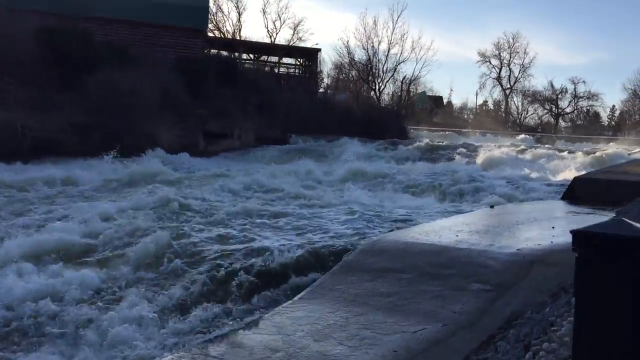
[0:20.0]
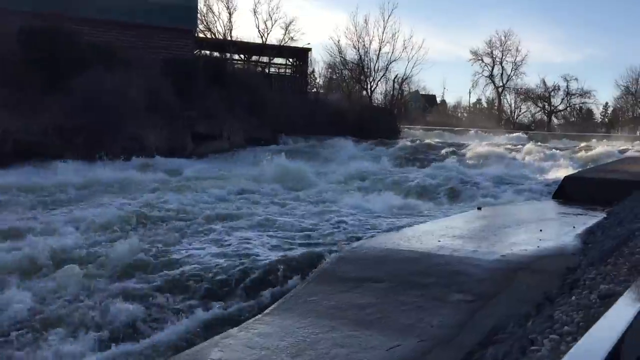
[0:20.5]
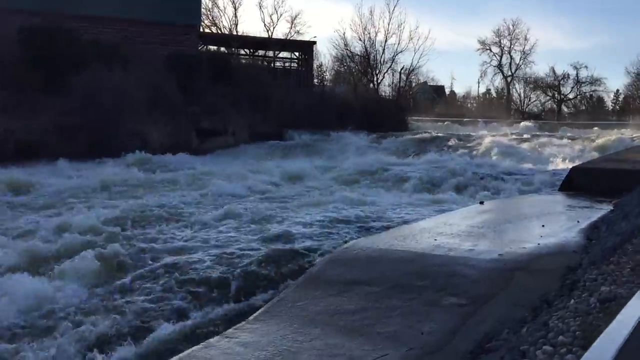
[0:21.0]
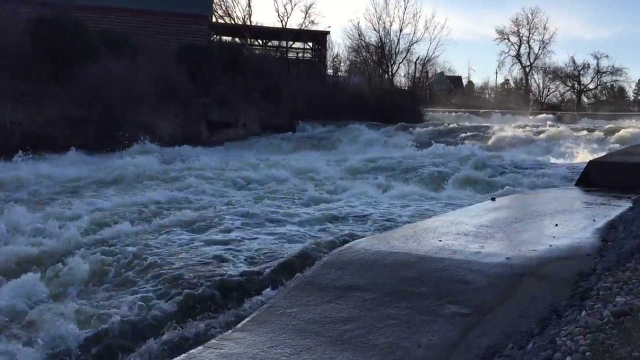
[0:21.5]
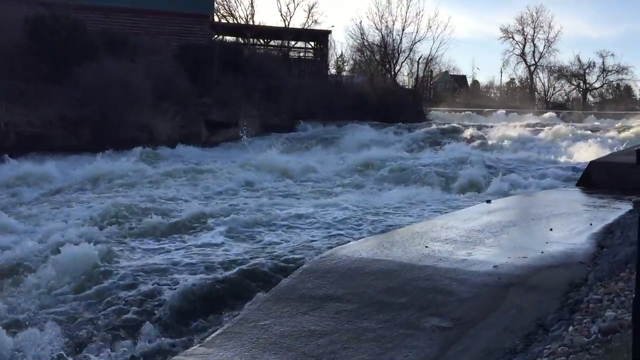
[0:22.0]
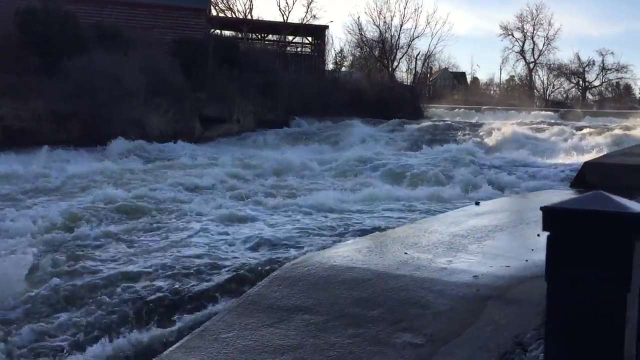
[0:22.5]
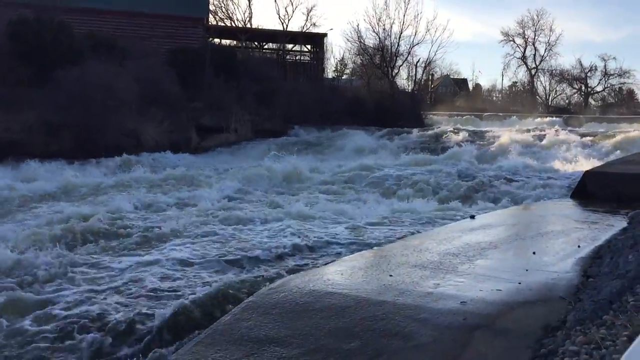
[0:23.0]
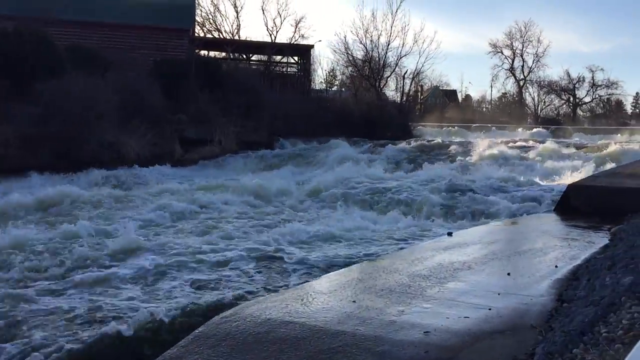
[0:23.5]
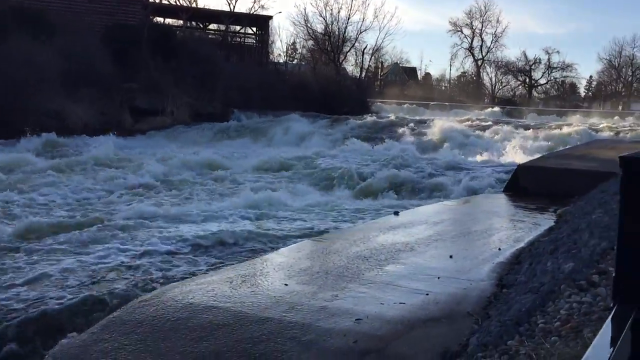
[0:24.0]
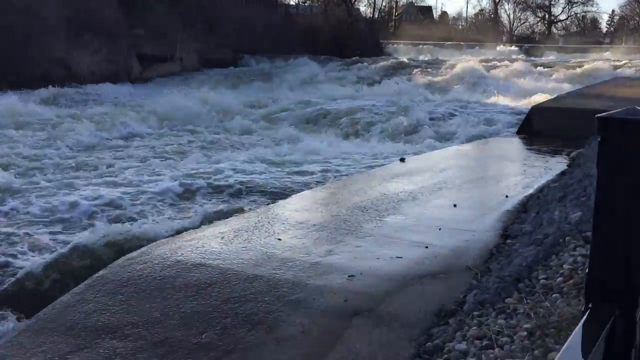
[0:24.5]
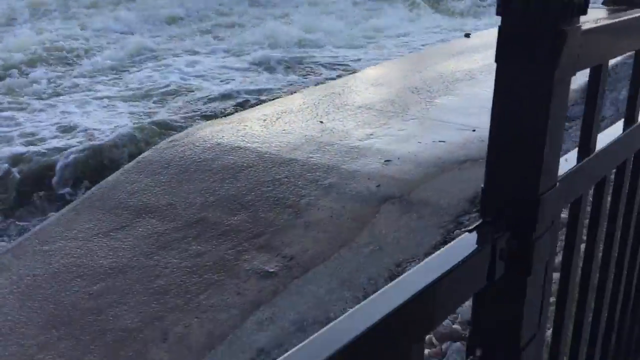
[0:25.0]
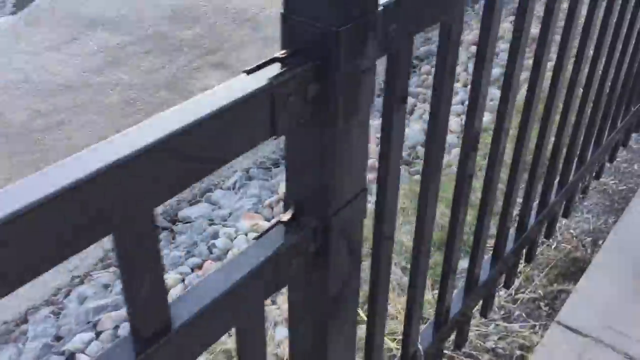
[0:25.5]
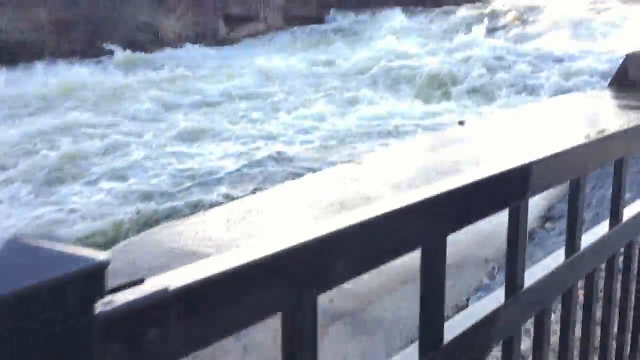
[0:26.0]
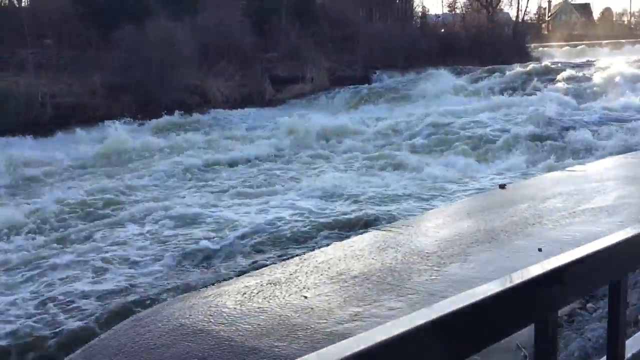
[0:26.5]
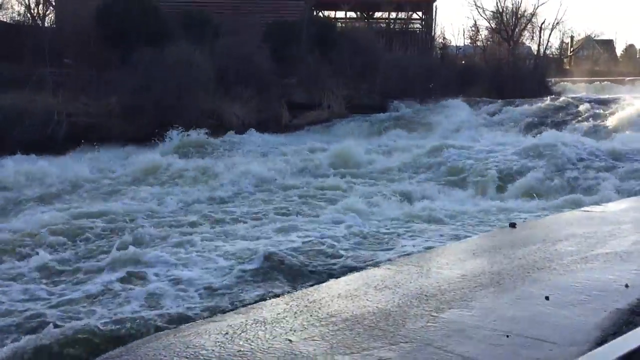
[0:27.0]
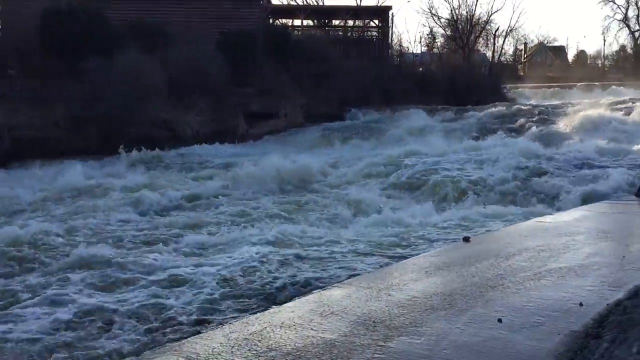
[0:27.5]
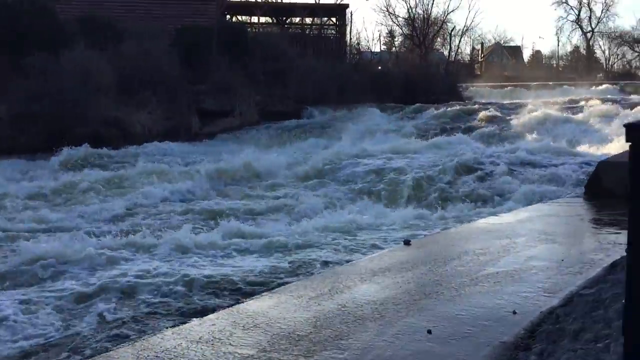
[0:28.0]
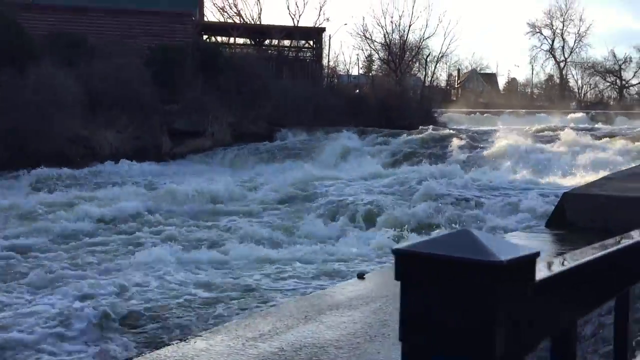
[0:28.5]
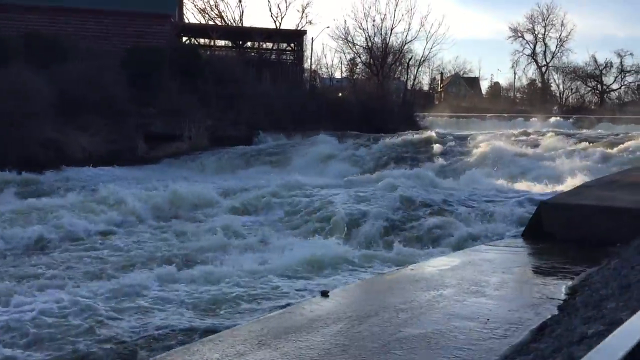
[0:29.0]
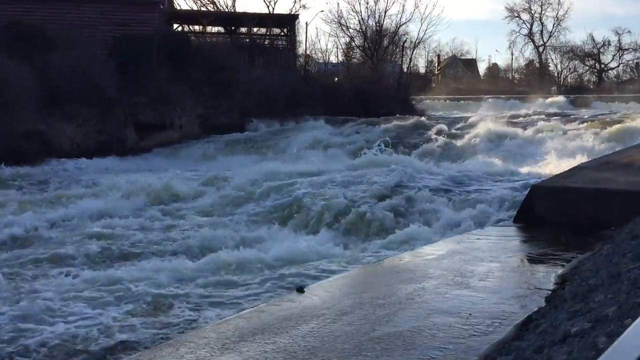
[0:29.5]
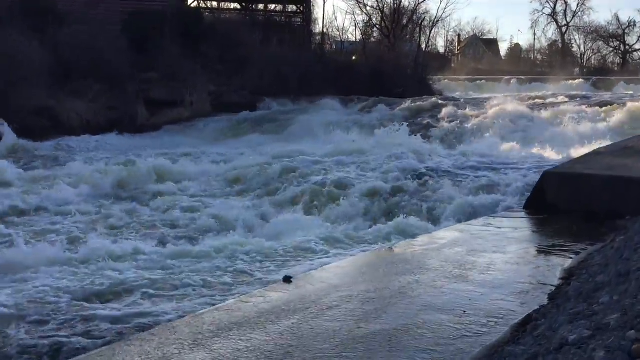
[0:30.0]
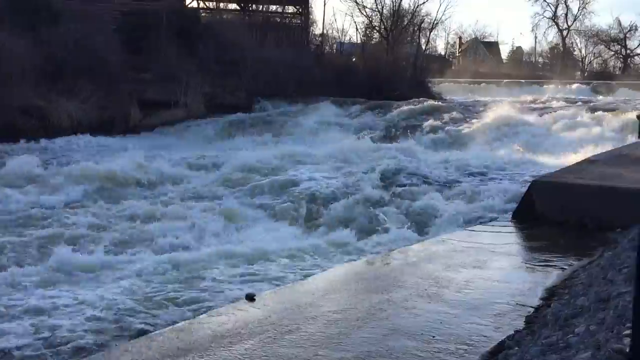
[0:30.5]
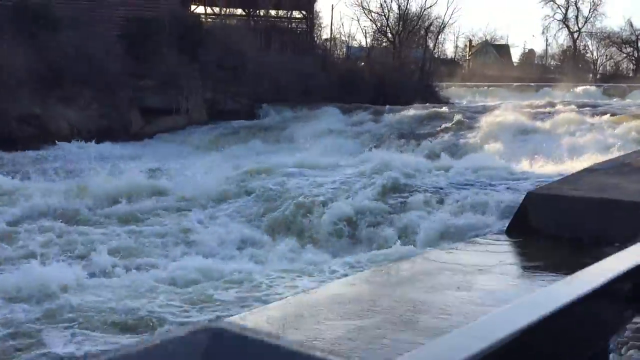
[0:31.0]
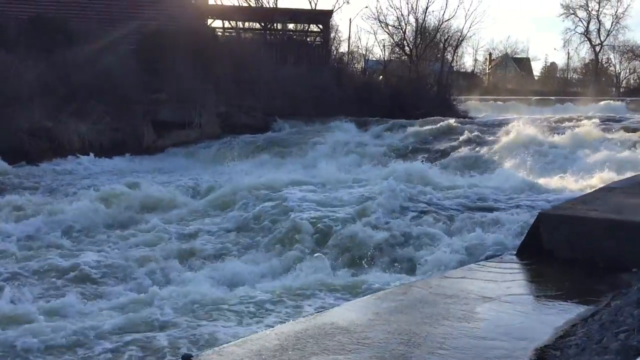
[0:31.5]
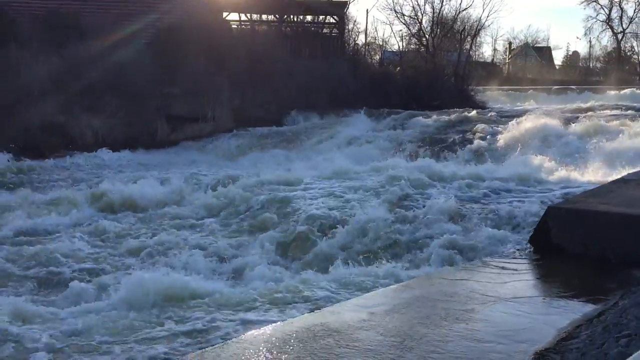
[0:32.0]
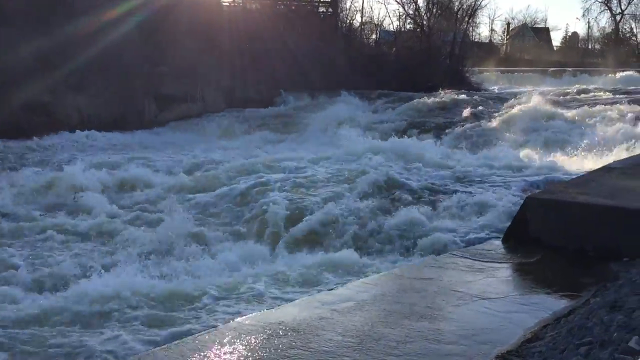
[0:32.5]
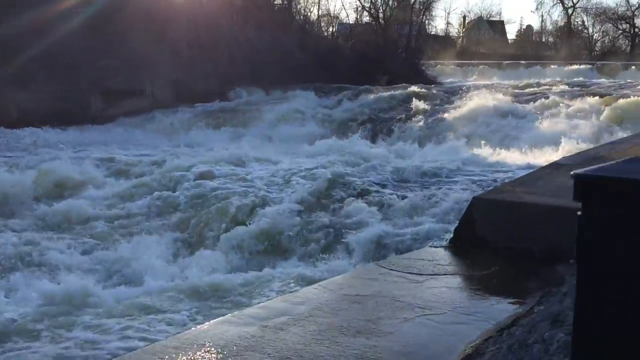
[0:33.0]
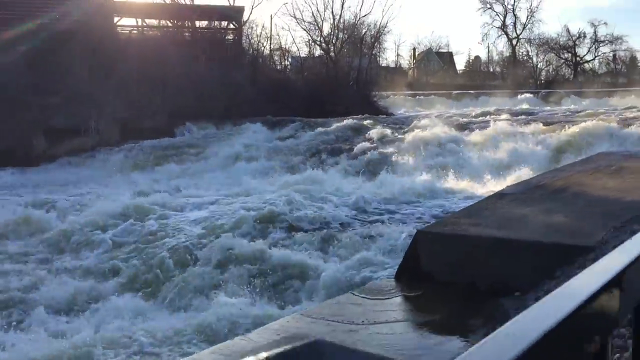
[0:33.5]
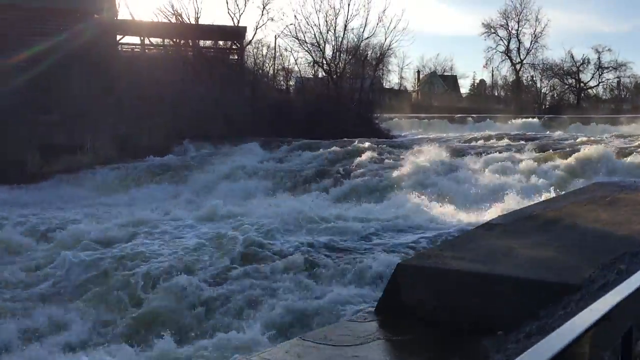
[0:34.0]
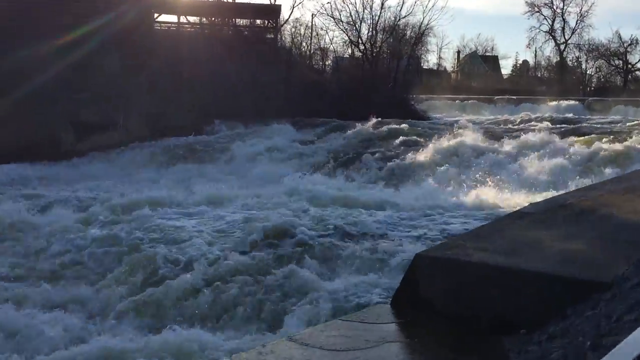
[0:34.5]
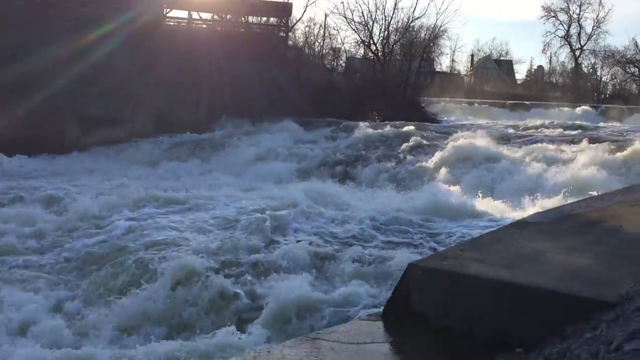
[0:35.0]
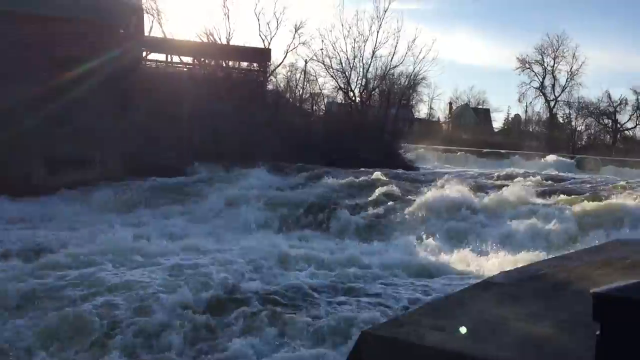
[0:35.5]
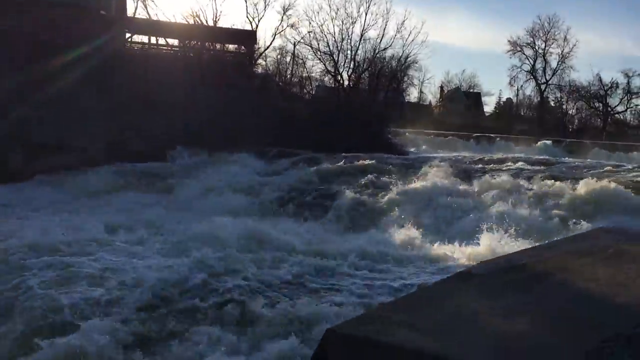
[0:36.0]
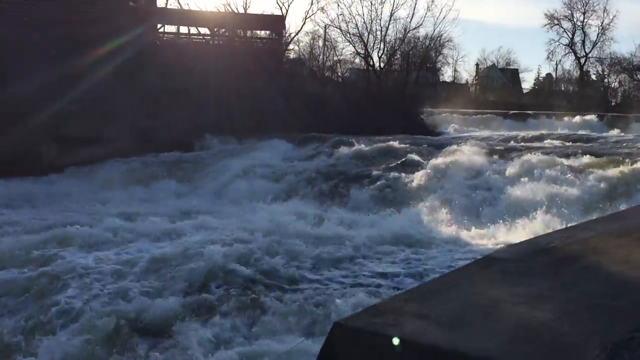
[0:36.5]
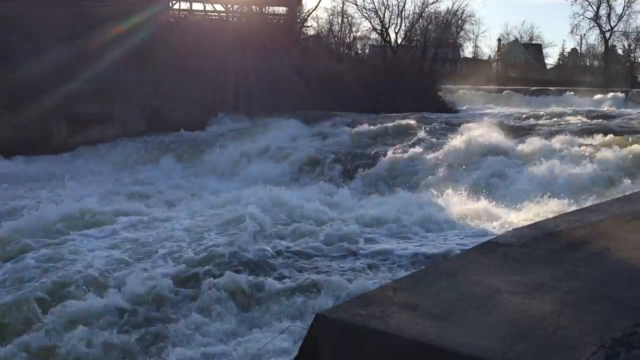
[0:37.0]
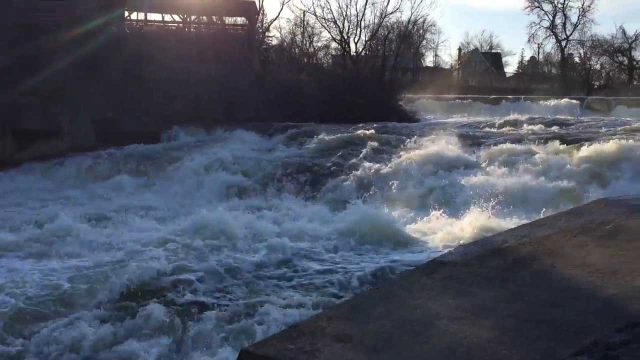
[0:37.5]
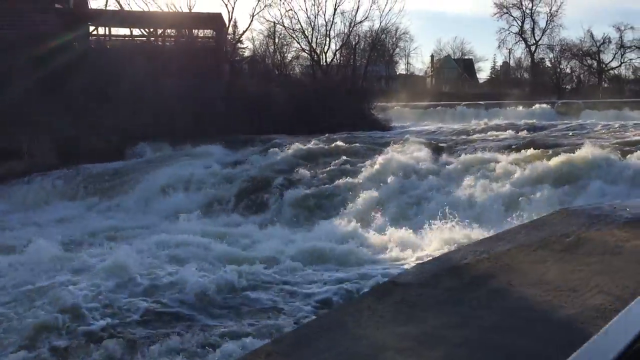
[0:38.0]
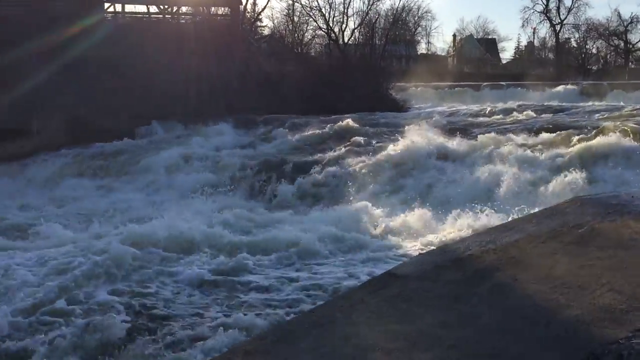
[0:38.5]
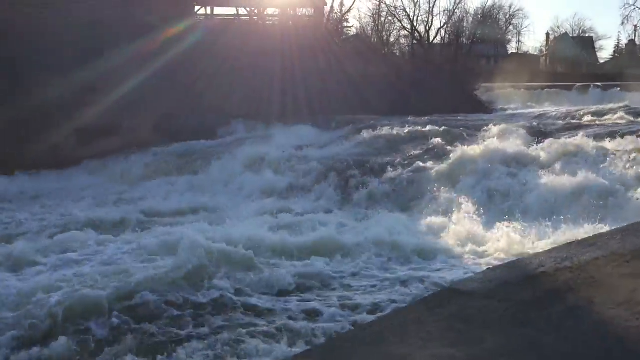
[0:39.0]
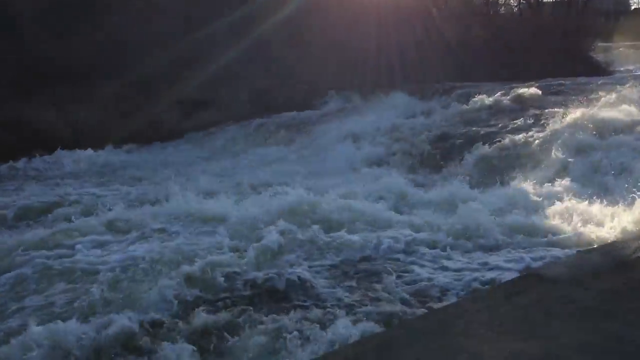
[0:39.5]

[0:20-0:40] The water rushes very quickly down the vast river. The stones are partially wet from droplets coming off the large splashes. The person shows the gate a bit more clearly, revealing metal bars at its bottom. Beams of sunlight come through the wooden panels of the building and shine on top of the water in front of other houses in the background. There seems to be a line of telephone poles in the back, maybe in front of the houses. The water looks dark, and parts of it look green where it is not aerated. The person pans back and forth, showing the vastness and speed of the water, which rushes so fast it looks like it could almost be an ocean.